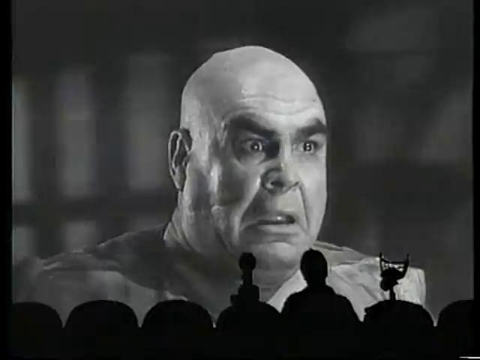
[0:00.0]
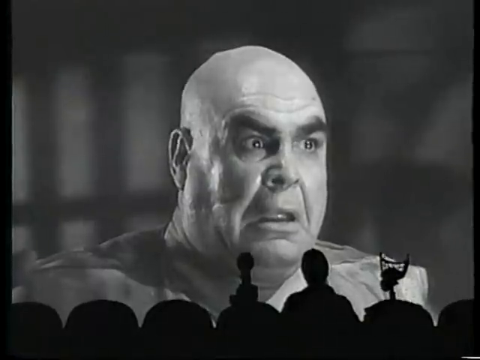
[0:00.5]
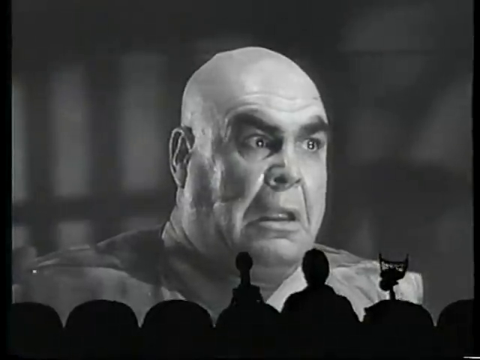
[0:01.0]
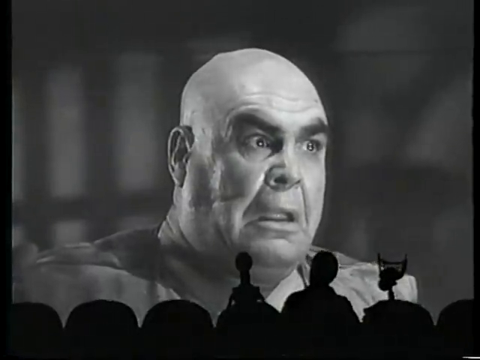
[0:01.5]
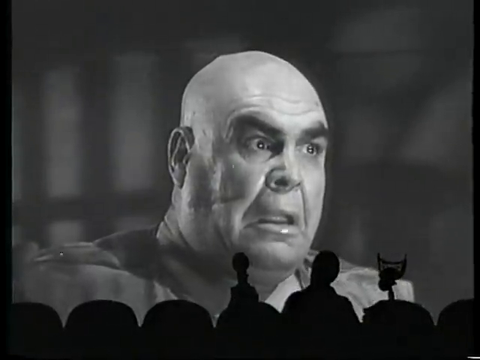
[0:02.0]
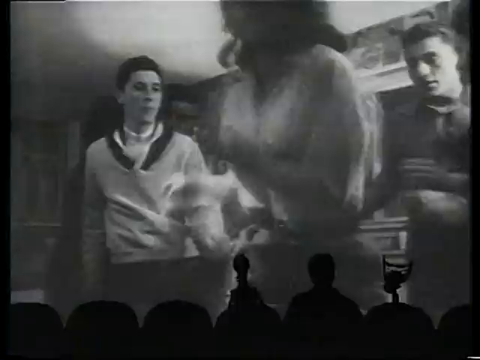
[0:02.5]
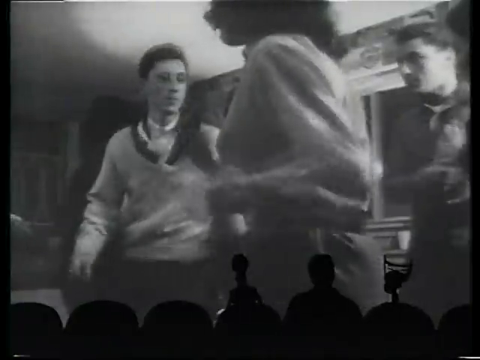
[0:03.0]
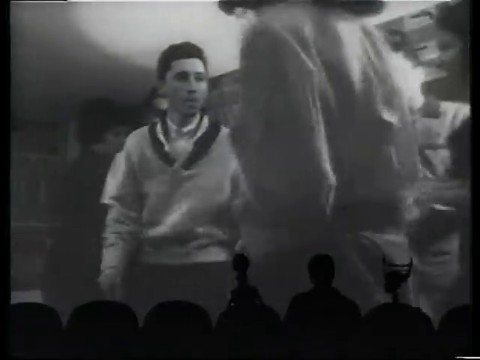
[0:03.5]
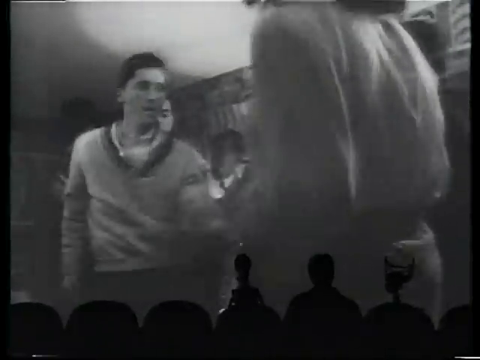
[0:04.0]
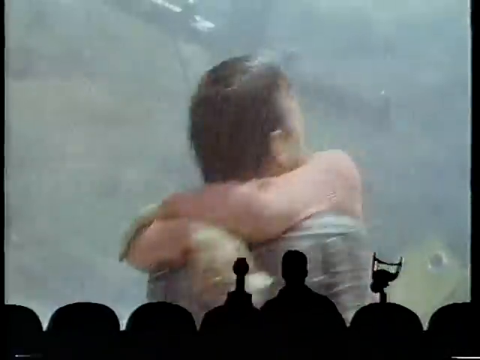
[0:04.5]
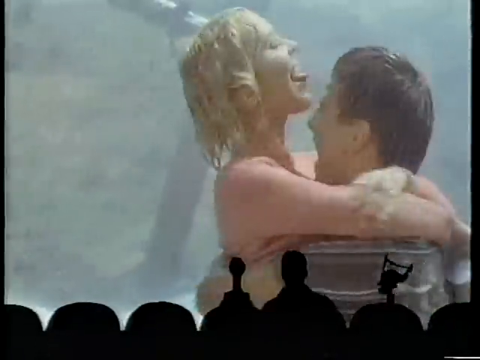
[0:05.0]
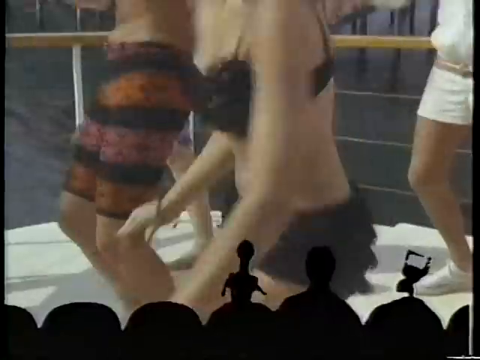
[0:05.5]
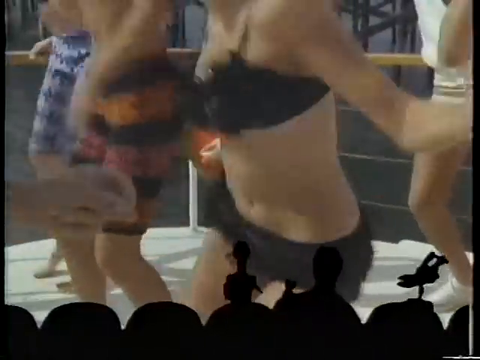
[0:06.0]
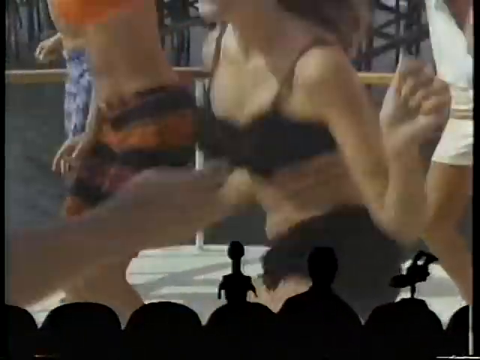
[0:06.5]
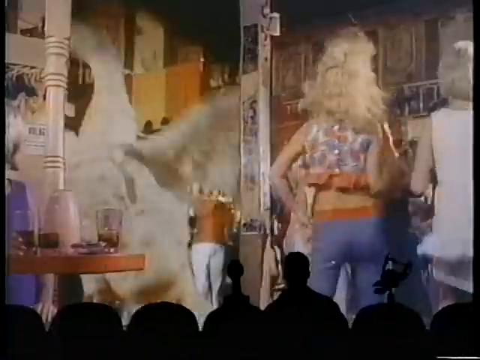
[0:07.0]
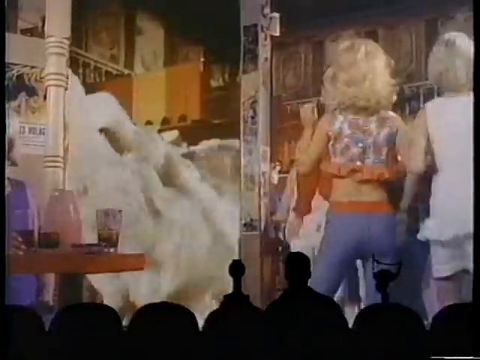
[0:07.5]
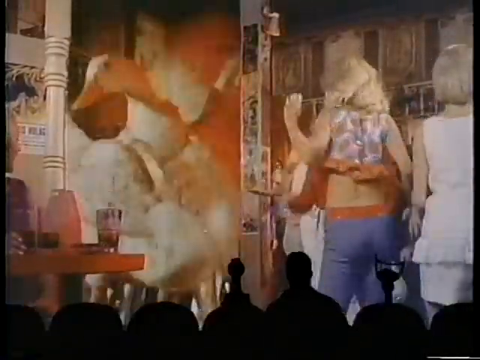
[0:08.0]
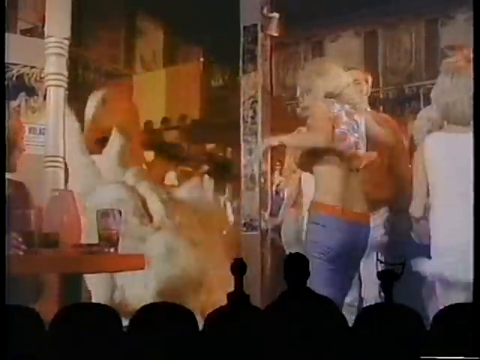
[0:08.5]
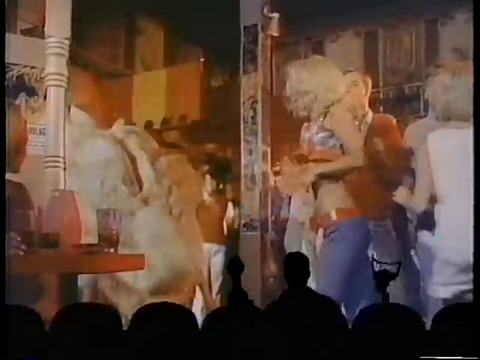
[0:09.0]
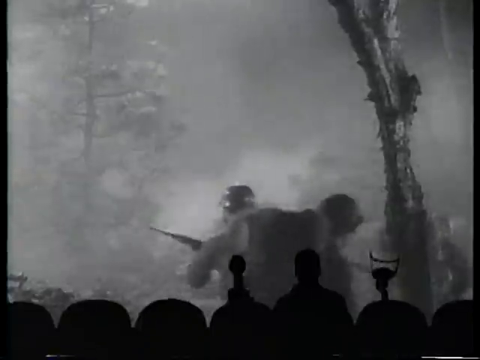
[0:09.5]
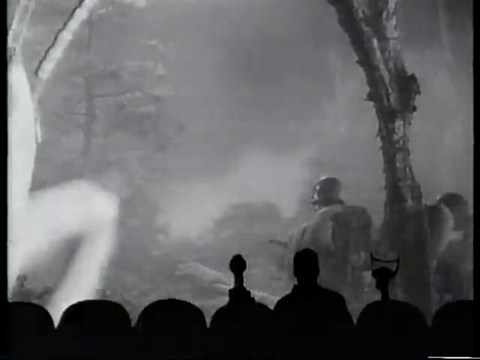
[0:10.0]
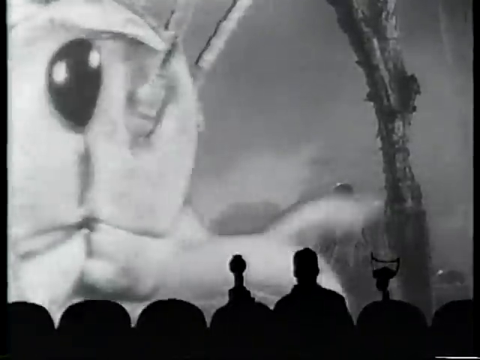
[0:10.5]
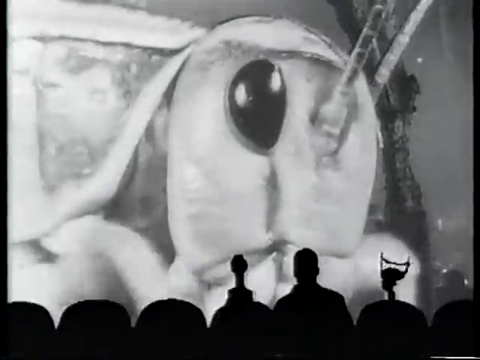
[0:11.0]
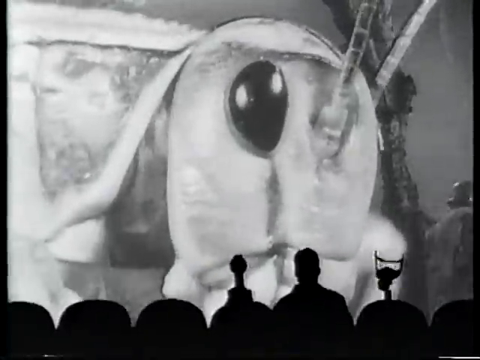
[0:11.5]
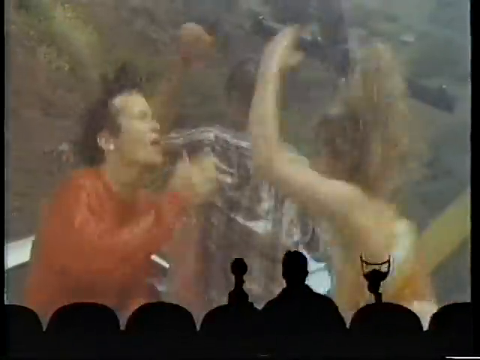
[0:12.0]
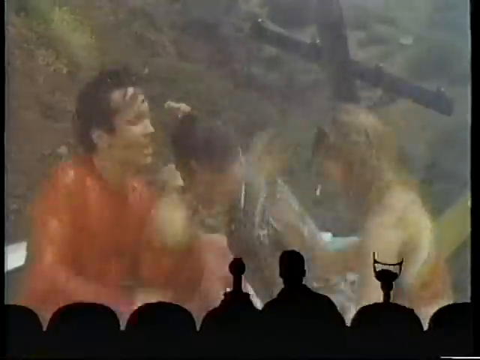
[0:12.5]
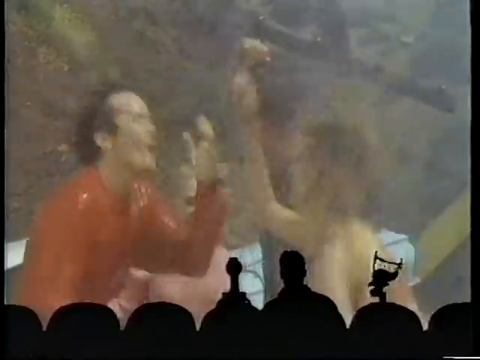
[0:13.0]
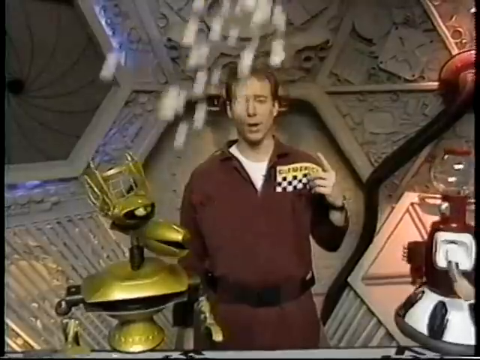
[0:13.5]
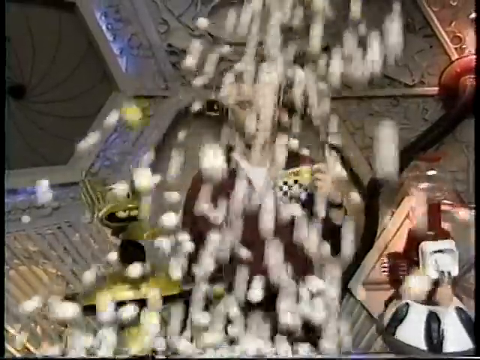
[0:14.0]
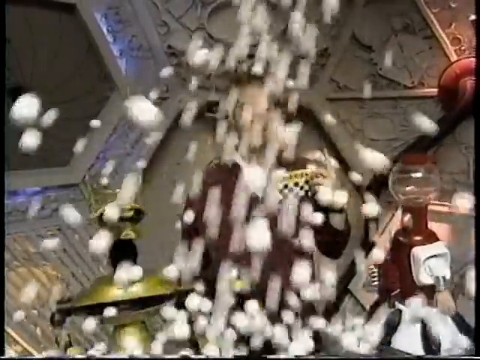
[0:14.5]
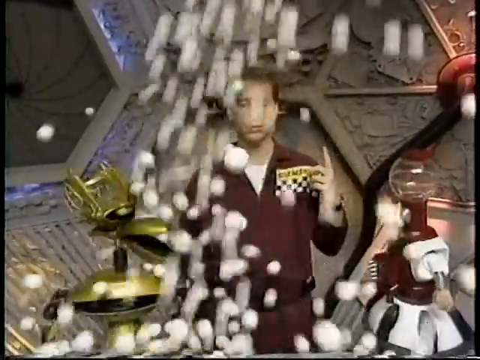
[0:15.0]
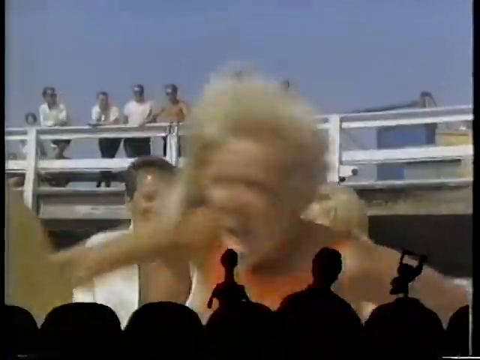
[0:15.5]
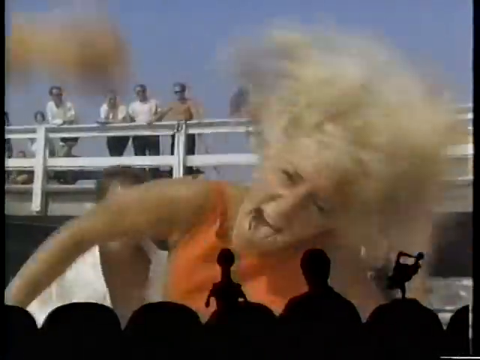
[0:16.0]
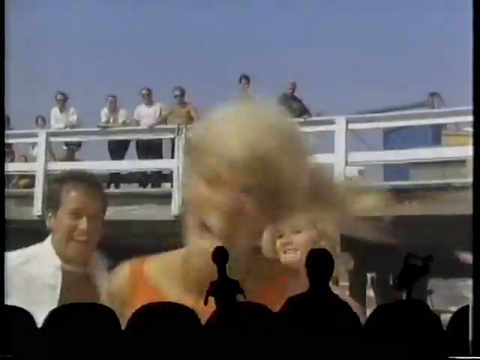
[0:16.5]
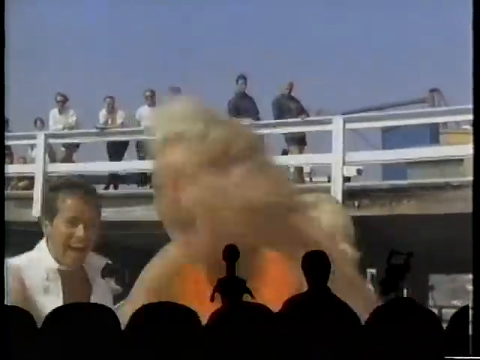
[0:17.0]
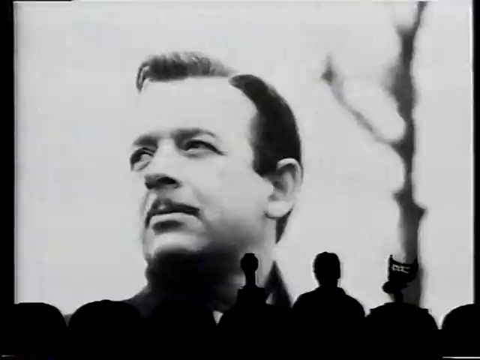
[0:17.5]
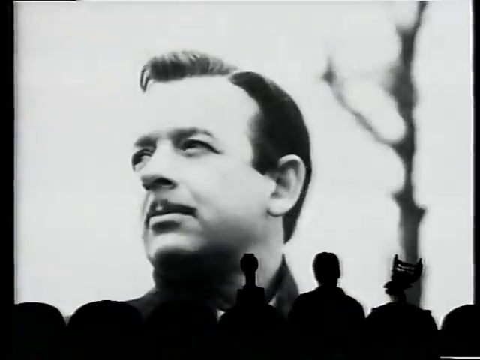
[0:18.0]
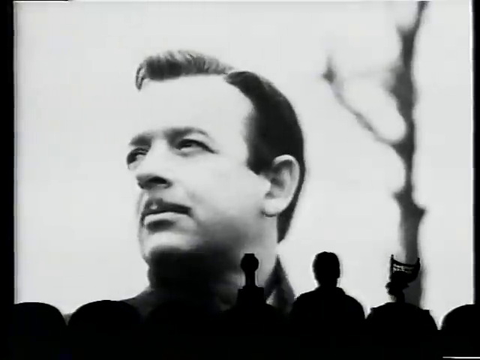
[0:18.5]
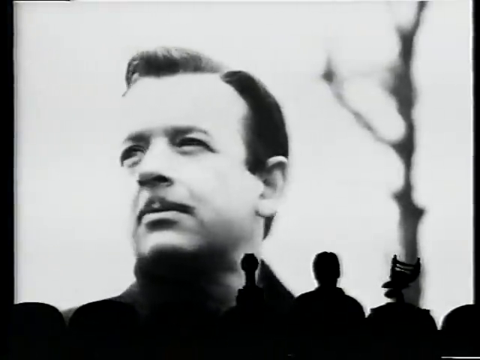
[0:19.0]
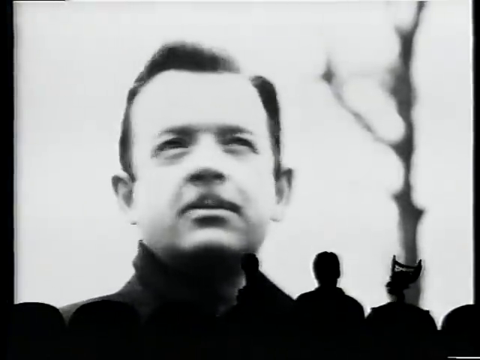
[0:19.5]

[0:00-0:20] What appears to be a black-and-white movie plays in a movie theater. A creepy-looking man with long hair, bald on top, is seen from the left side looking toward the right side, and he looks dazed and confused. People are dancing. The footage switches to color, showing people dancing as if at a bar, and someone dressed up as a goose dances on the left side of the screen. It returns to black and white, showing a gigantic insect that looks like either an ant or a grasshopper. Back in color, people dance in the rain, someone has a bunch of balls thrown on top of his head, and people are at the beach. A woman with her mouth open swings hard, moving around hard and fast.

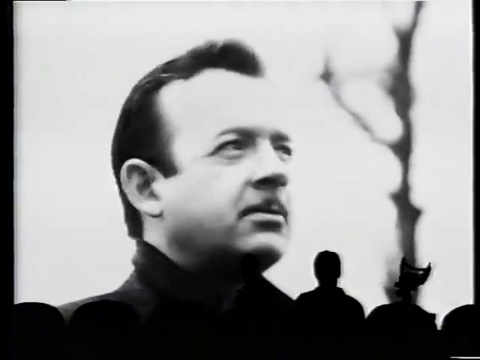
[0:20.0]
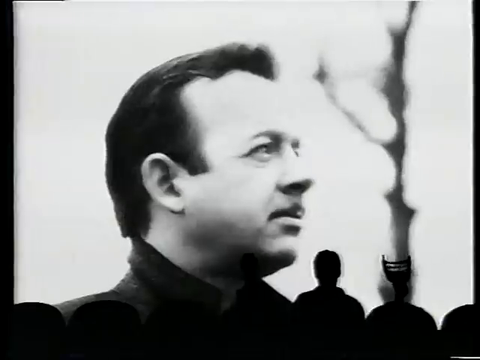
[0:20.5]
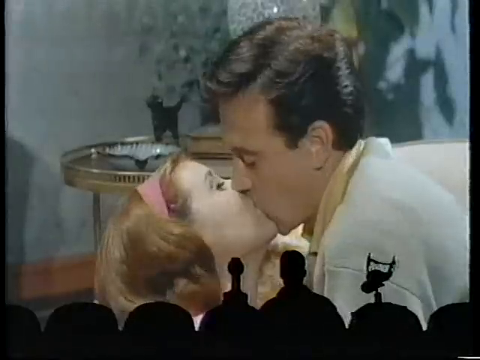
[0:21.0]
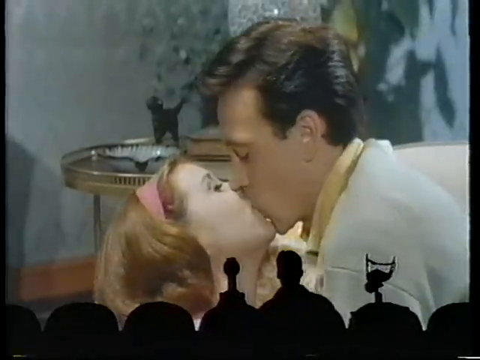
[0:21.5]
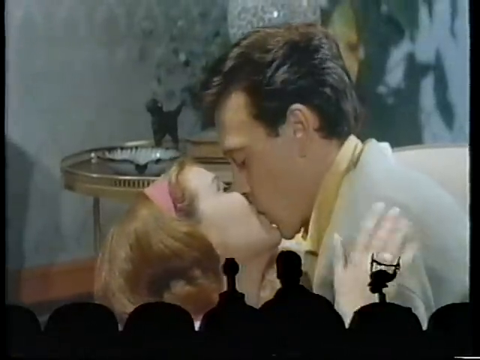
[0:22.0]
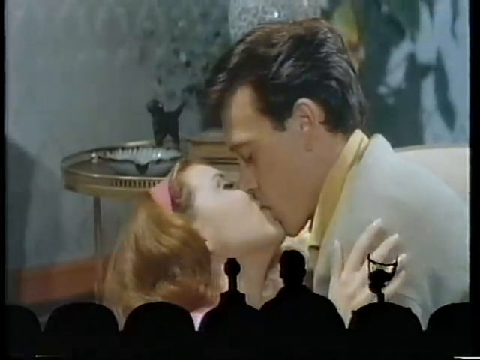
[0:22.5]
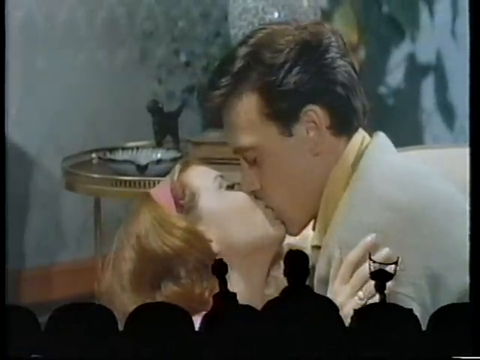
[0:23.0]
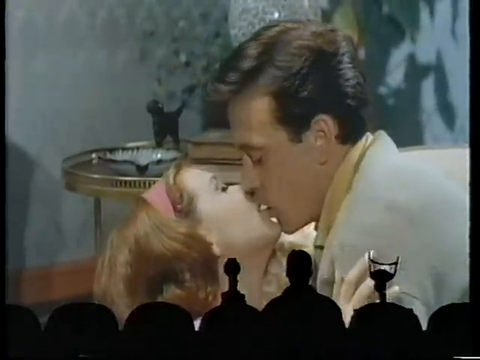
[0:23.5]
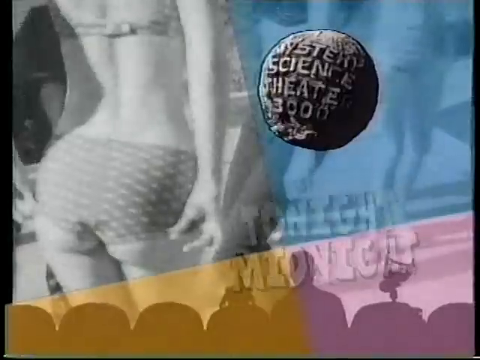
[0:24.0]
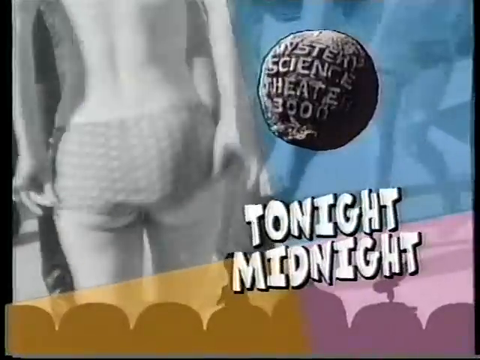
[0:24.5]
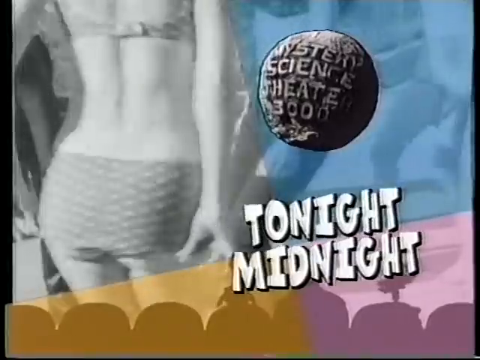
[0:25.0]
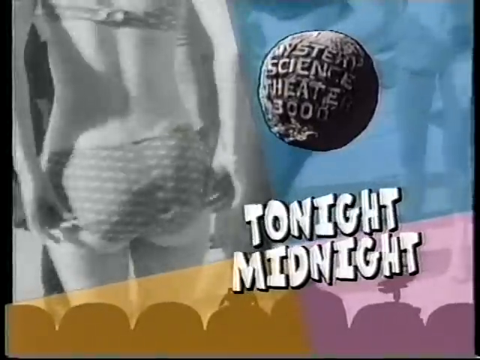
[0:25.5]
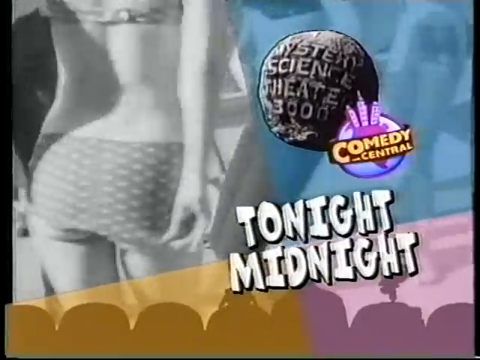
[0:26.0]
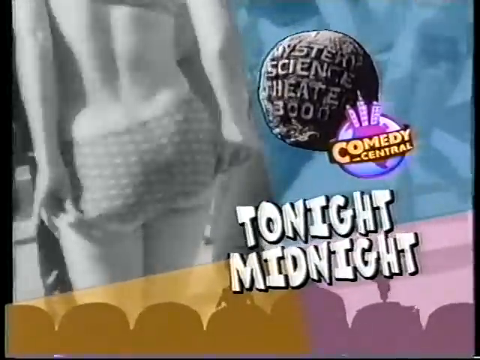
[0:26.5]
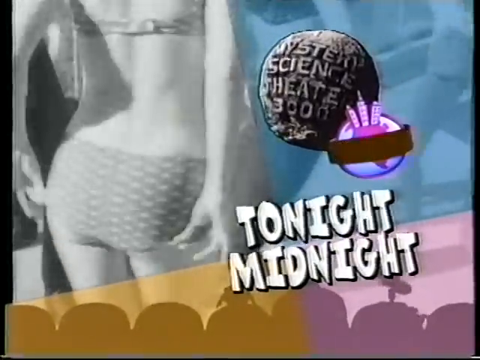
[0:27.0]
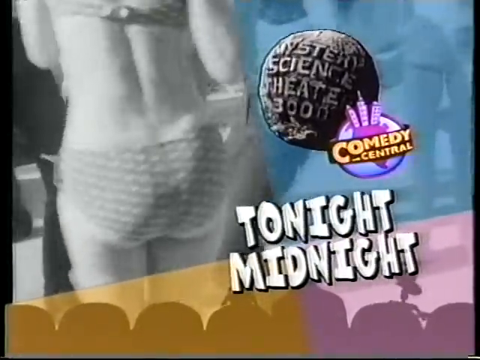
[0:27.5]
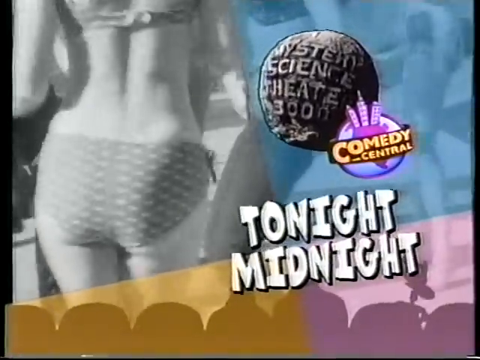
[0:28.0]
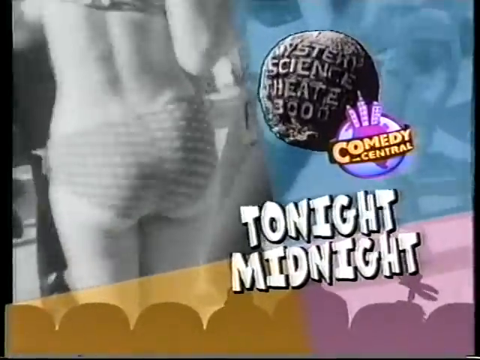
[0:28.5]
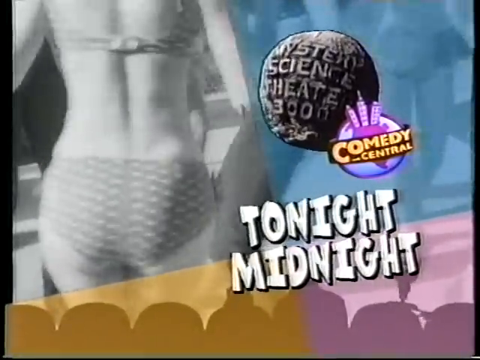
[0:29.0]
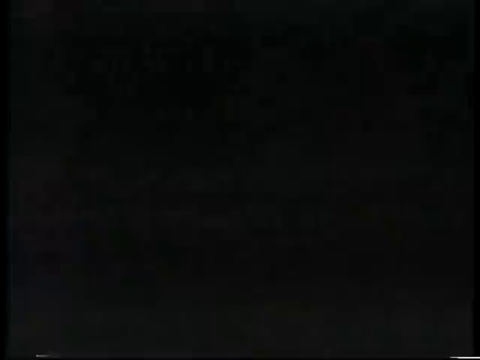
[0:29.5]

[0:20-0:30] The scene looks like a movie theater, with the outlines of people's backs visible as if seen from the row behind them, mainly one person on the right-hand side. Some of the footage is black and white. Then a couple appears in color, with text reading "Tonight Midnight" and "Mystery Science Theater", and possibly "Boom". People are dancing, and "Comedy Central" appears on screen. Then the screen goes black.